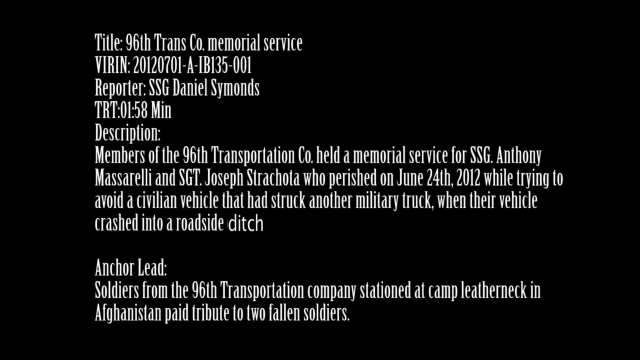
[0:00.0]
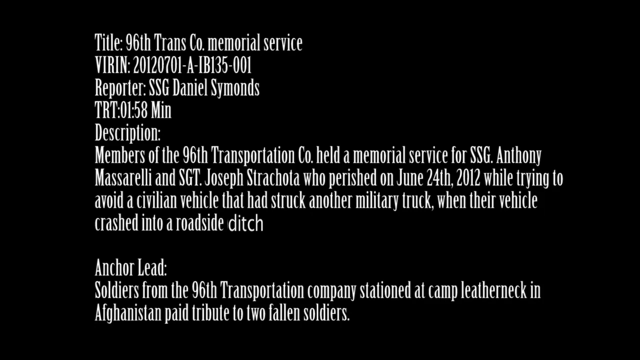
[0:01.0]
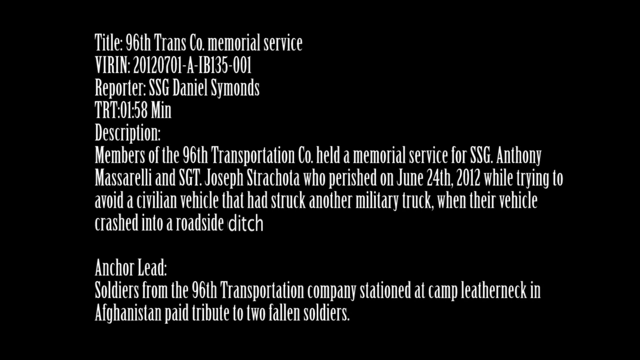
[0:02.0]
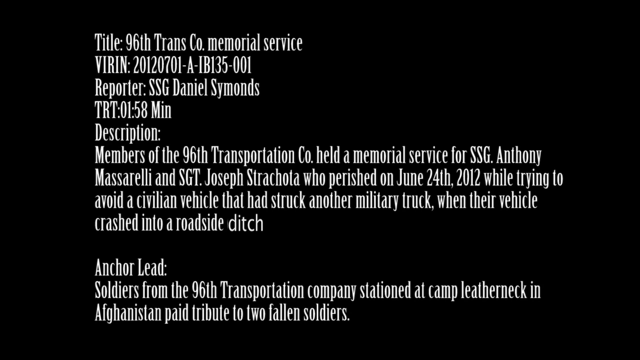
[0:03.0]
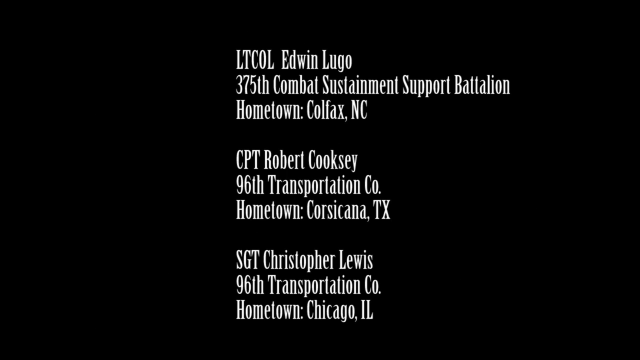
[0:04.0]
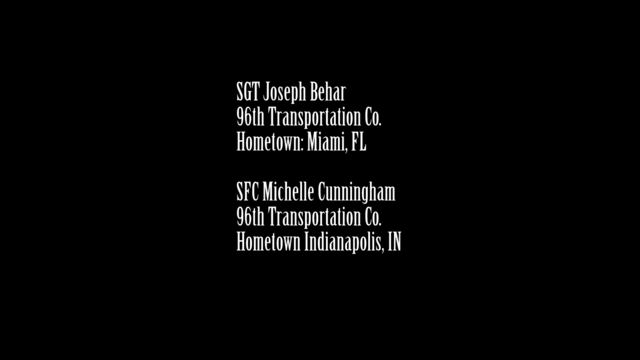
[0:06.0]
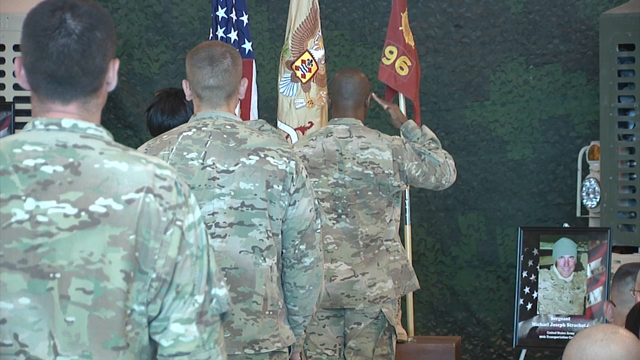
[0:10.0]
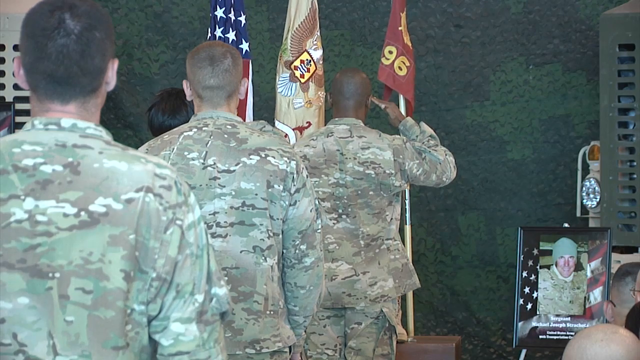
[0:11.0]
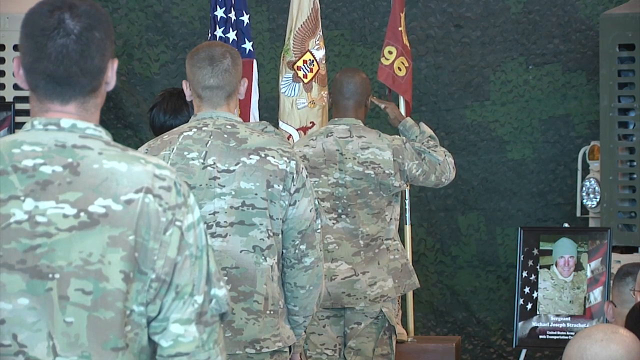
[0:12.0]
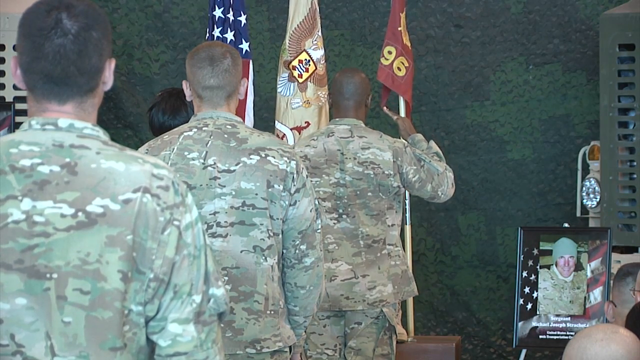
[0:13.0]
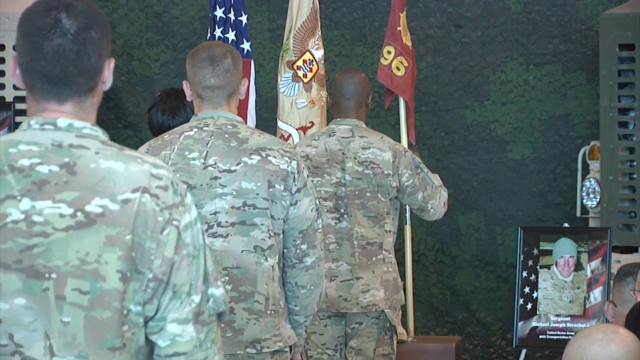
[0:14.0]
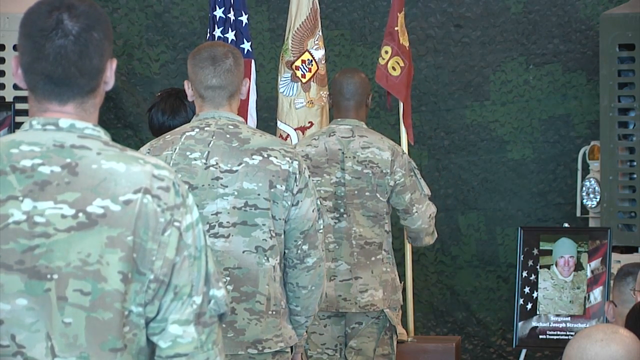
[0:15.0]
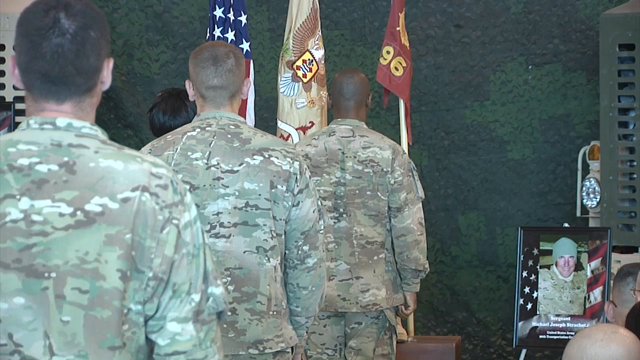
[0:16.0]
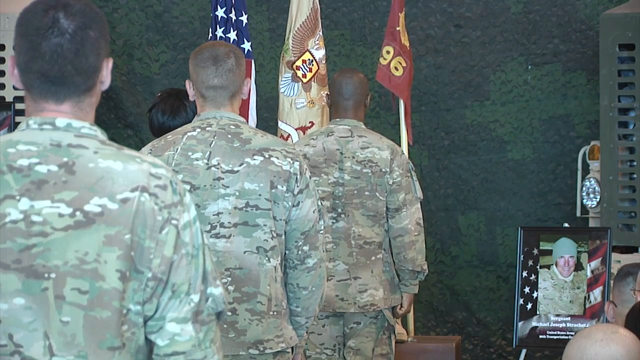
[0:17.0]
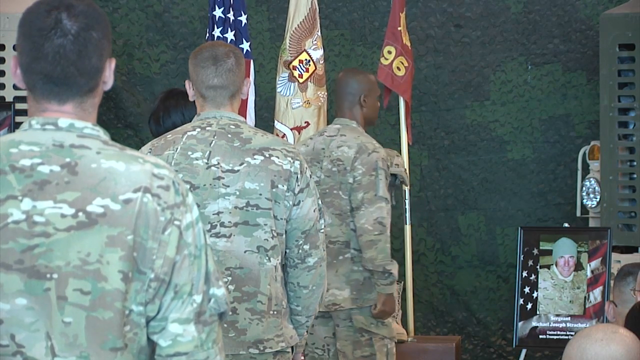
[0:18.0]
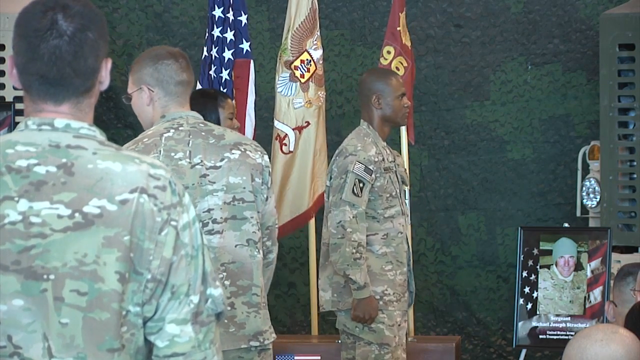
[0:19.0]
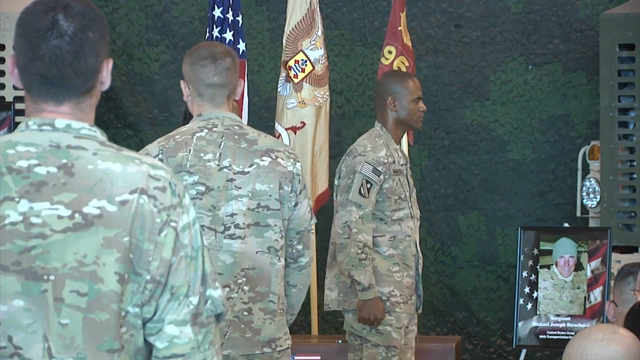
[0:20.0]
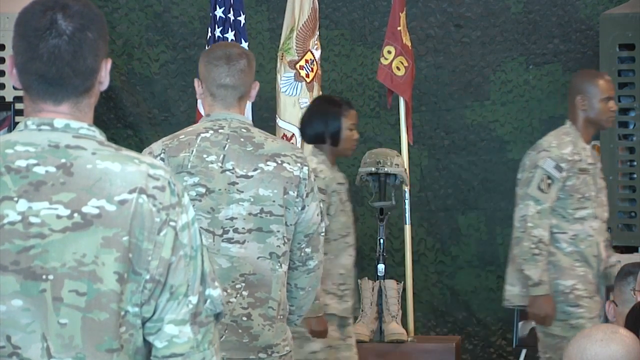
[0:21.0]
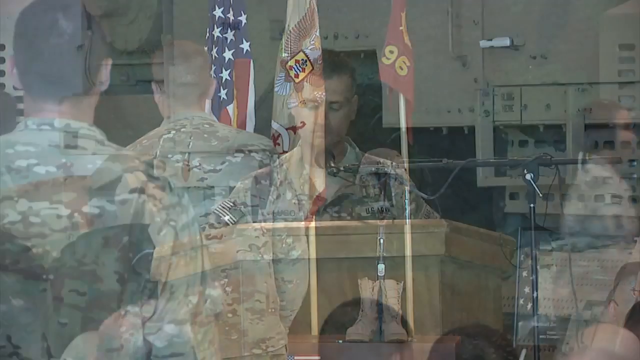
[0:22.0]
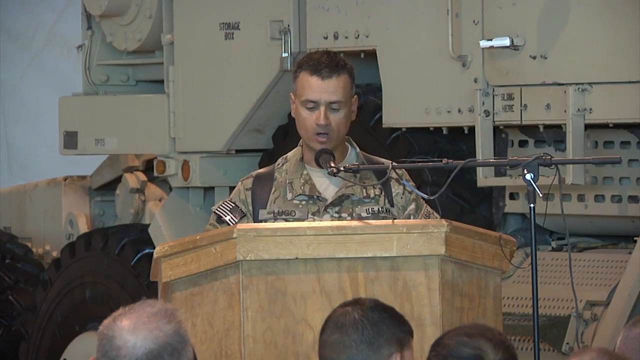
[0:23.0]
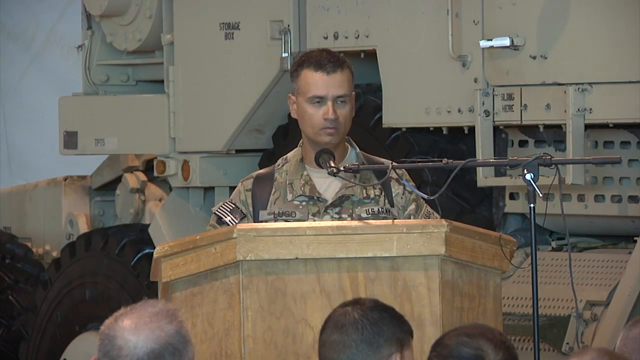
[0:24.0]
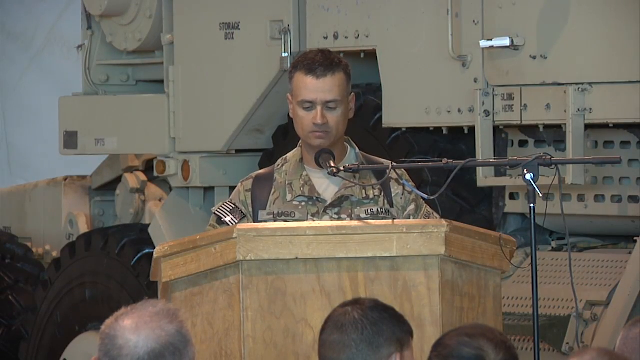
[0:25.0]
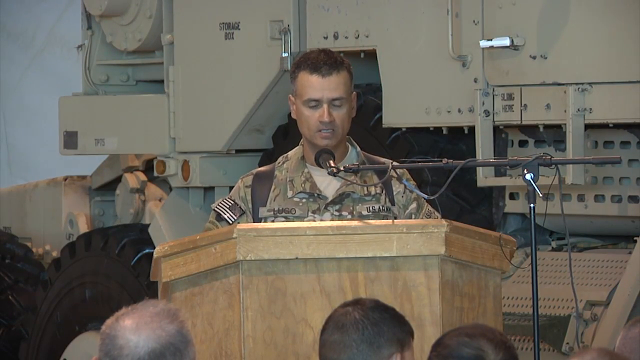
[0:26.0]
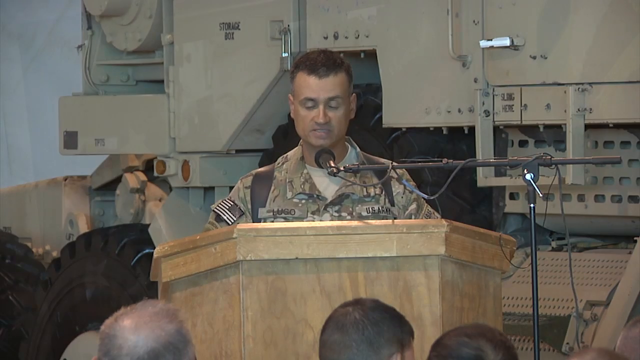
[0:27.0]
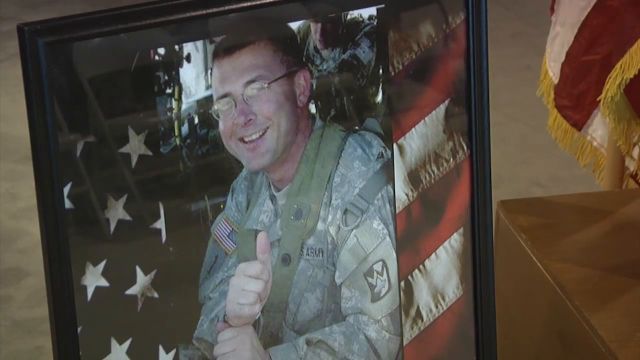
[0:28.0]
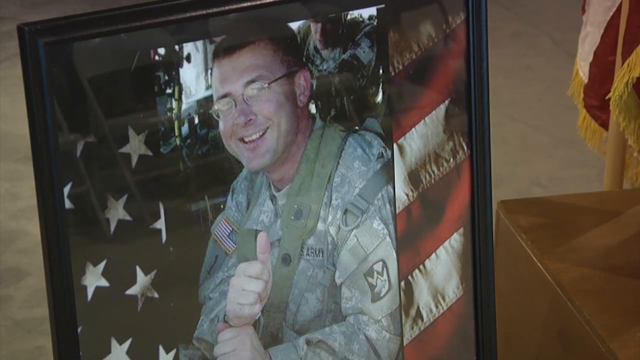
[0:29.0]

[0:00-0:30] White text on a black background appears in a very vertical font that is difficult to read. It looks like a military report by Staff Sergeant Daniel Simons about a memorial service for a staff sergeant and another sergeant who died in a car wreck; the text says they were trying to avoid "a civilian vehicle that had struck another military truck" when their vehicle crashed into a roadside ditch. Then it says "anchor lead," with more text below. The video switches to a black and white screen listing the names, places of work and hometowns of three military people, then quickly to a screen with the same for two more. Next is a color picture of three military people in camouflage uniforms. The one in front, a Black man with a bald head, is saluting; behind him is a white man with a nearly bald head and light brown hair, and behind him a white man with dark hair. In front of them are three flags: the American flag on the left, a middle flag with a yellow rectangle in it, and a maroon flag on the right with the yellow numbers "96" on it. The Black man slowly and formally lowers his right hand from the salute to his side, then turns to his right in a very upright position. The man behind him turns to his left, appearing as if he might say something to somebody, then turns back to the front. The Black man walks off the screen to the right, followed by a Black woman also in a camouflage uniform. The video then switches to a white military man standing at a podium with a microphone in front of him, looking down as he speaks; he does not seem very high energy and seems perhaps sad. Some big piece of equipment is behind him, possibly a ship. Then it switches to a photograph of a military person.